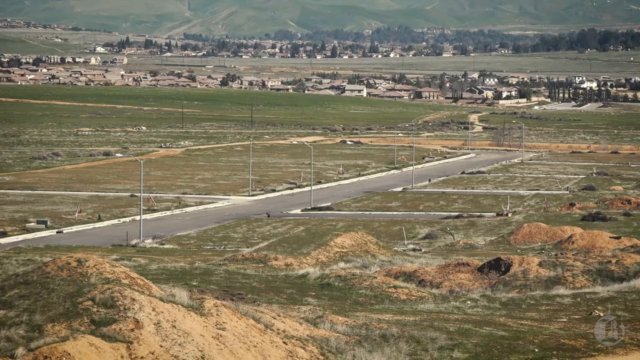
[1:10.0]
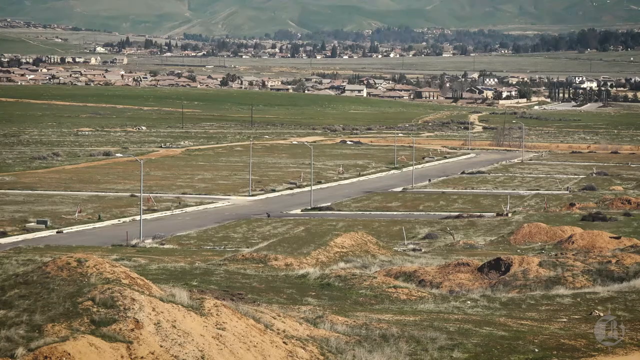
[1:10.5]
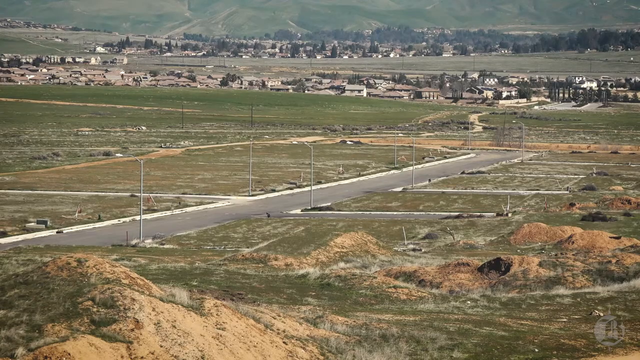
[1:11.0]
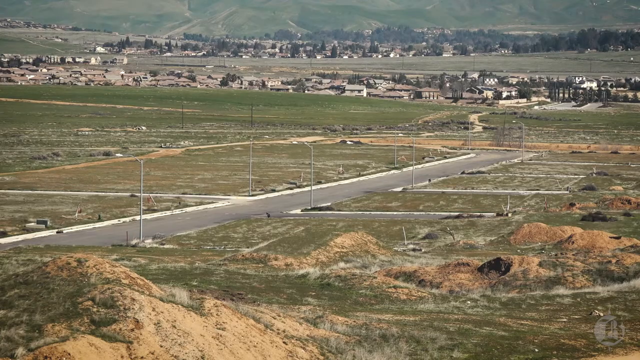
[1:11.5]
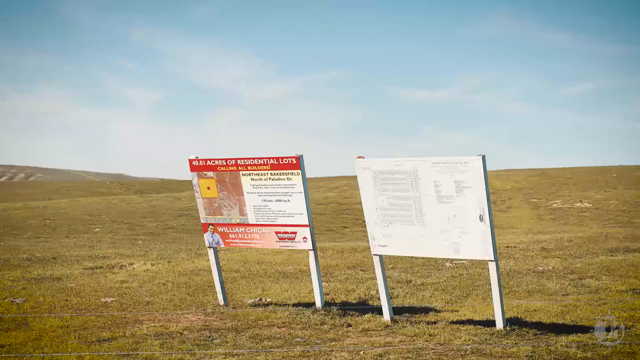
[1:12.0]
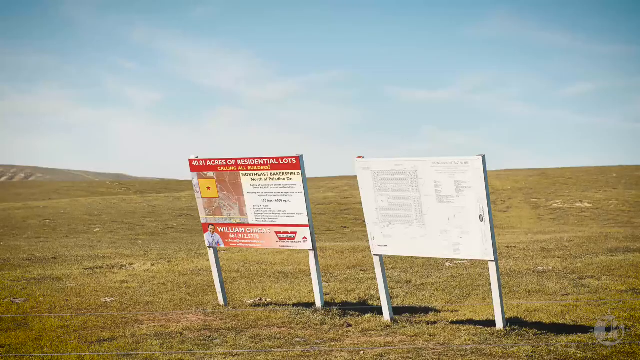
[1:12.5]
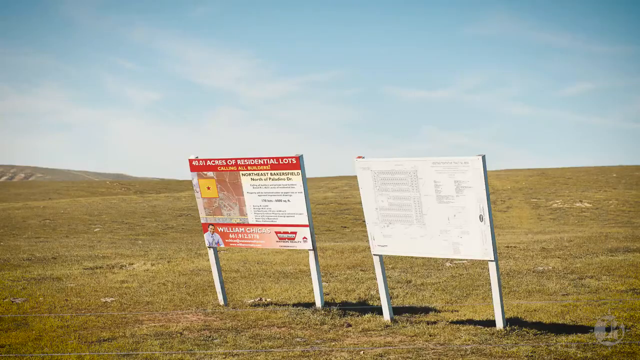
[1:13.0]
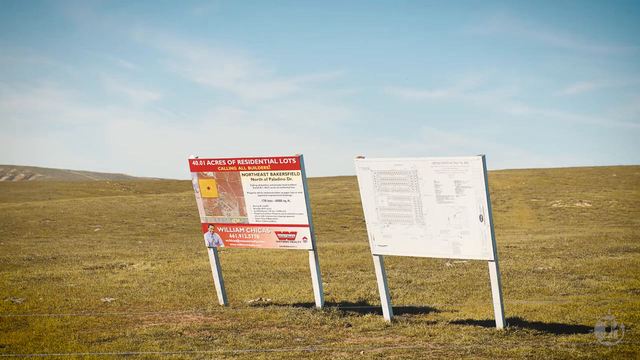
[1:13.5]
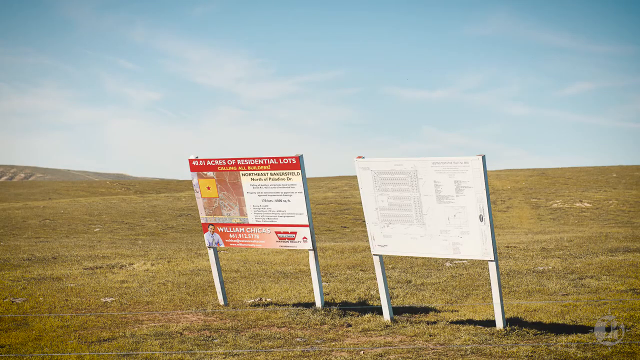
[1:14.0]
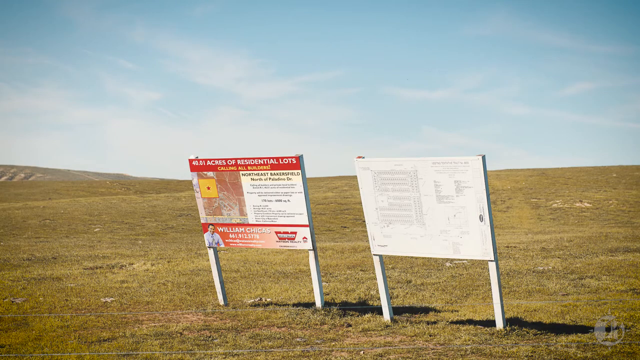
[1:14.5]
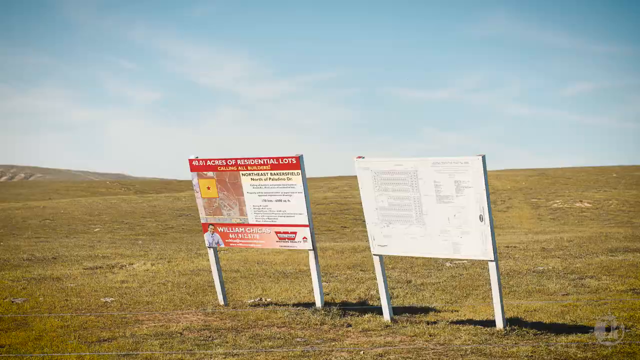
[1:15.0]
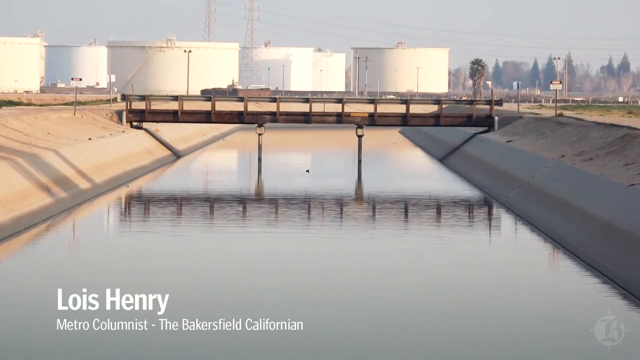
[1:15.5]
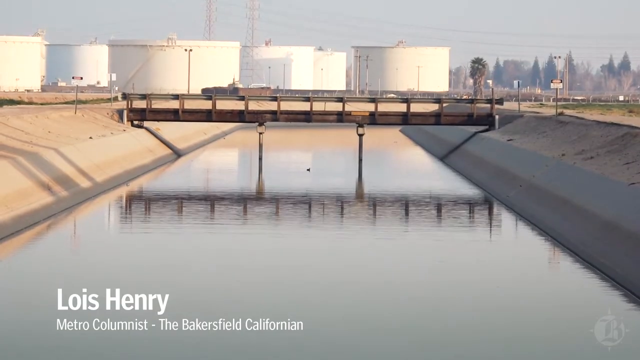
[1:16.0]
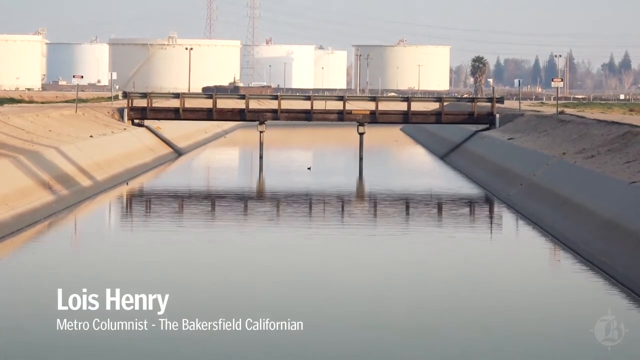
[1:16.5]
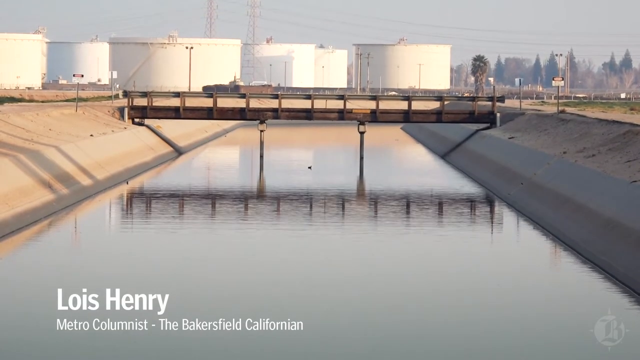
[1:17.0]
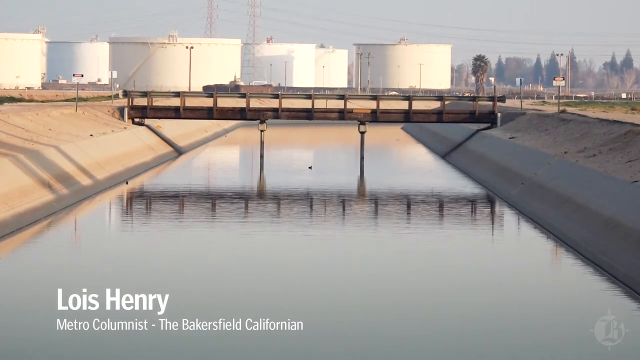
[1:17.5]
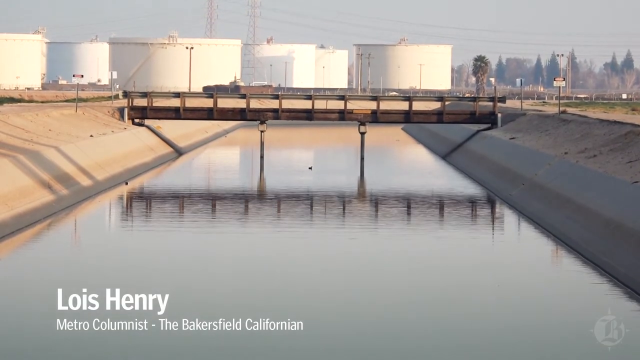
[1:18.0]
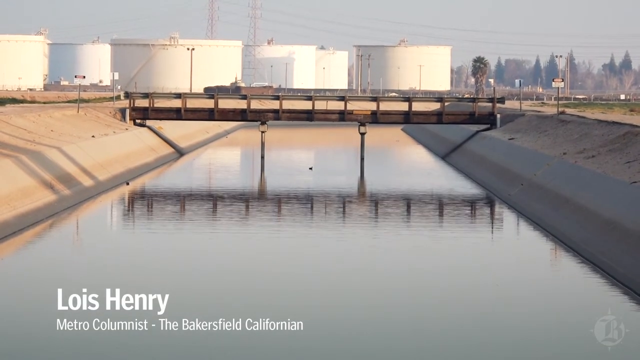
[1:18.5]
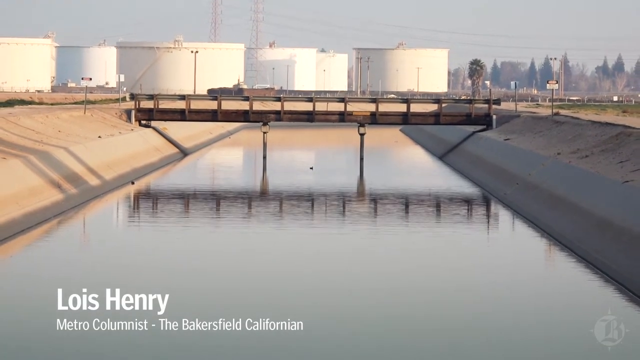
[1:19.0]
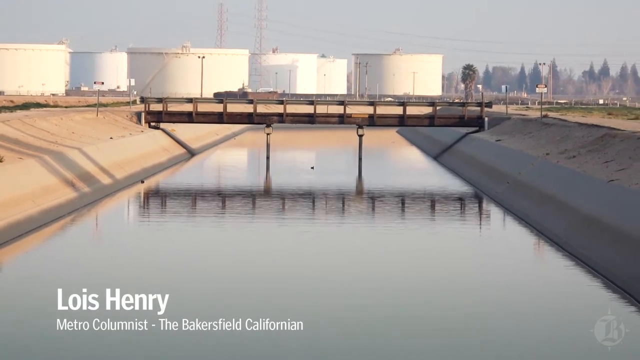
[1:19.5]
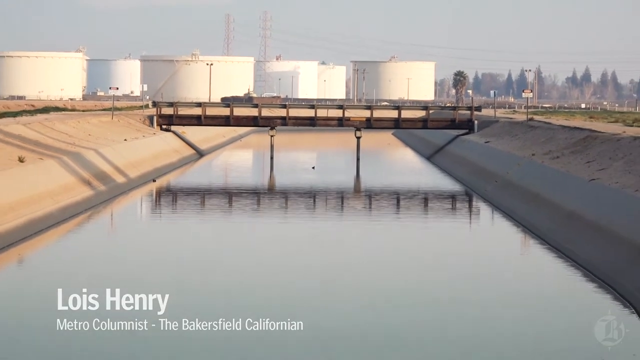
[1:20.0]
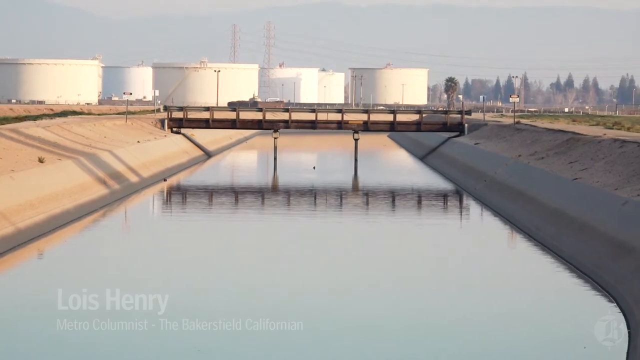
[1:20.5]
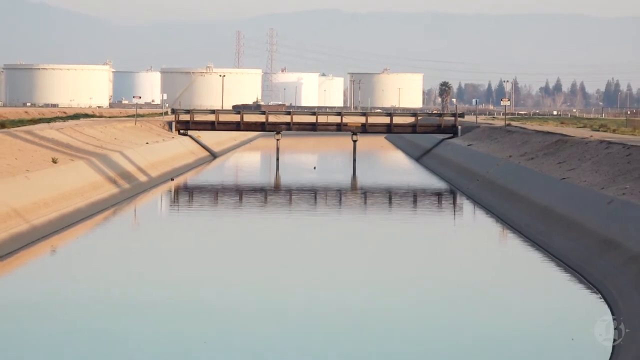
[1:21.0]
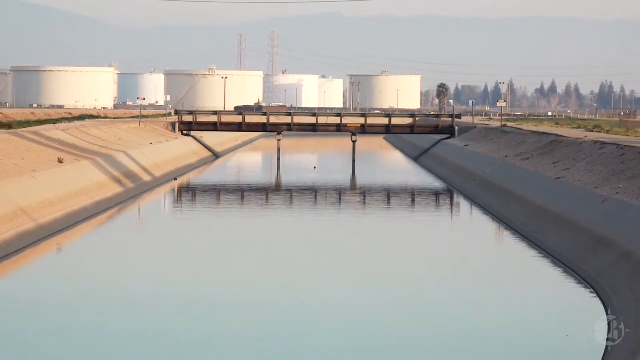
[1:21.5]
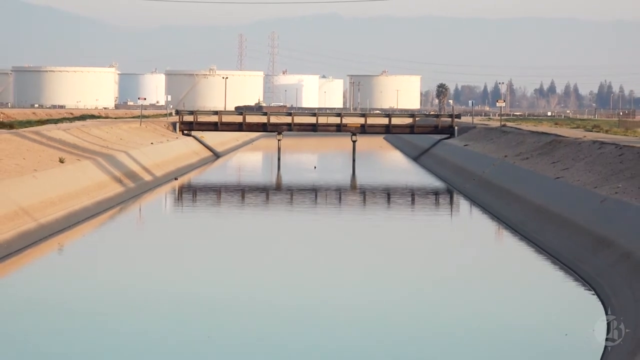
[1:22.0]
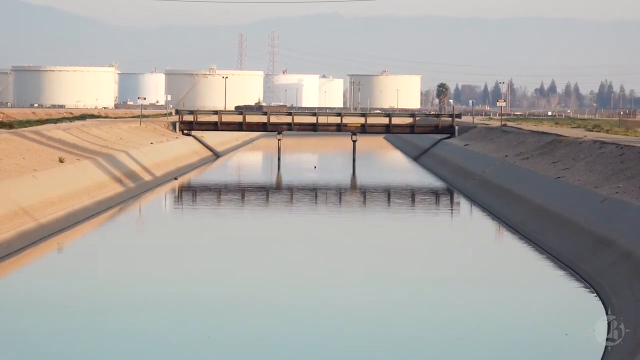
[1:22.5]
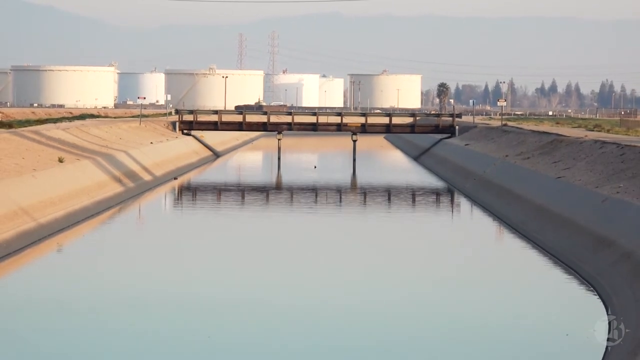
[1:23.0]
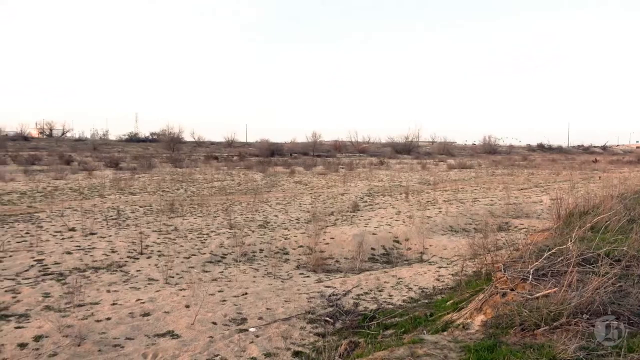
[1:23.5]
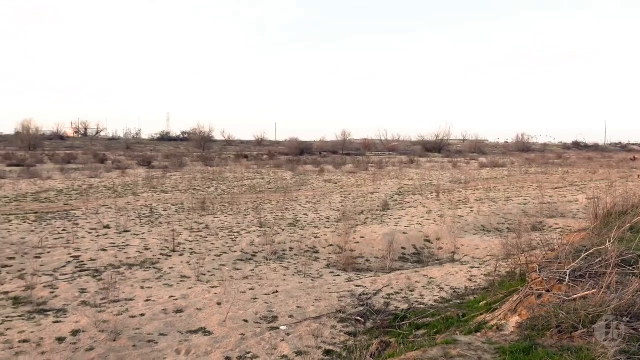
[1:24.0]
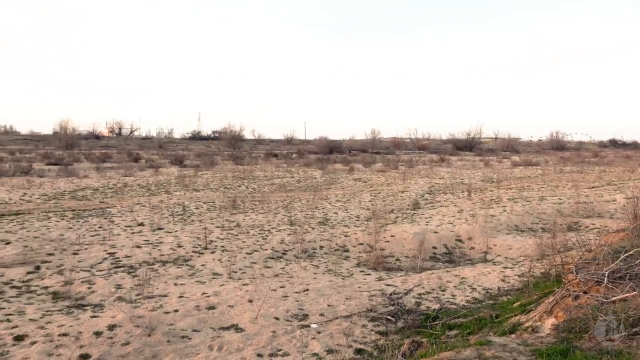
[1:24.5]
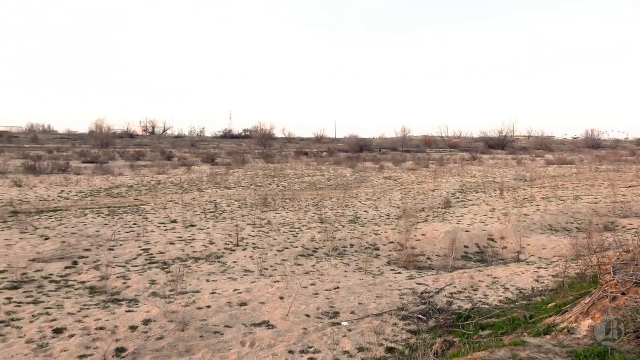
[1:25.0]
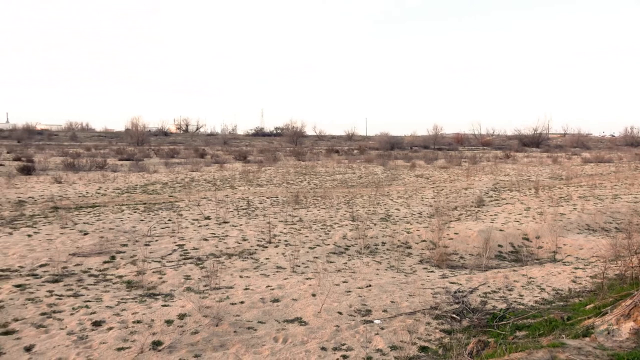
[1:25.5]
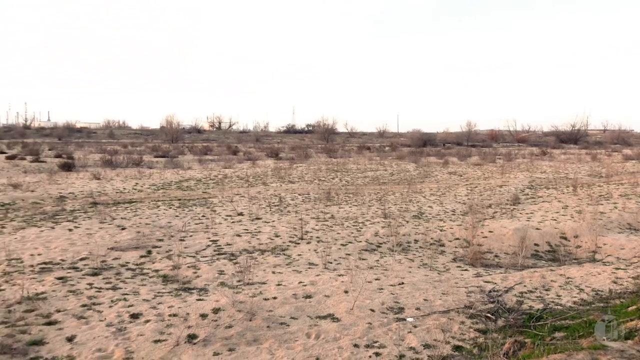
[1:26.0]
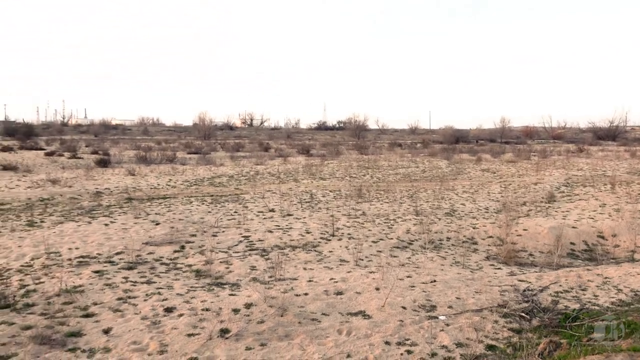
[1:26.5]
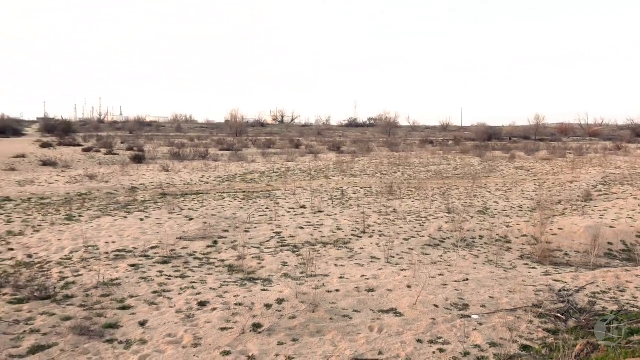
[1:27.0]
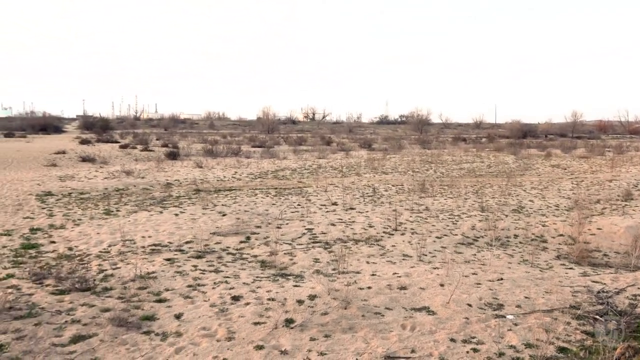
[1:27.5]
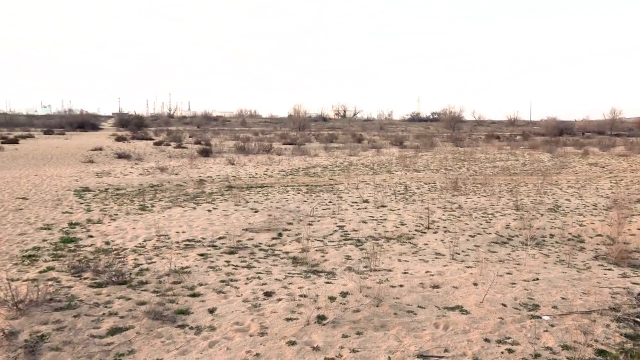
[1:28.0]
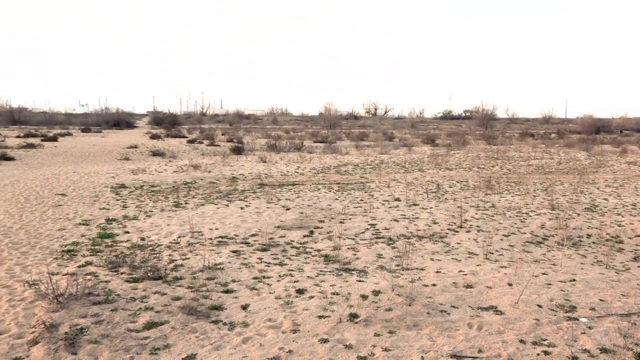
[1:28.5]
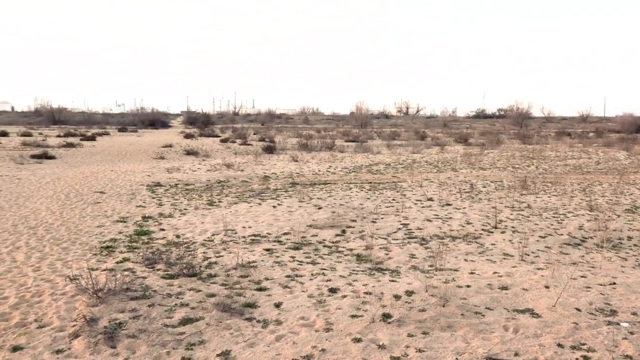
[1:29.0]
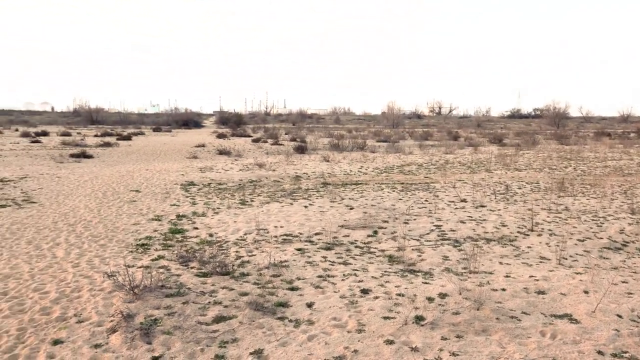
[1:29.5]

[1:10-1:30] A barren, somewhat hilly area of land has two signs on white poles. One is white and hard to read because it is very bright. The one on the left has a red strip and reads along the top "40.01 acres of residential lots" and "calling all," though it is hard to read because it is somewhat blurry. A map shows a yellow square and a red star marking the location, and the sign says "Northeast Bakersfield" with information, and below that the name William Chicas with his phone number and picture. It is bright and sunny. Next is what looks like a reservoir: a big area of water with sand on each side and a rusted walk bridge over it with two support beams, its reflection visible in the water. Massive white water tanks are in the background, and behind them are some red towers, possibly for power or radio. Far in the distance on the right are what looks like a railroad track, palm trees and fir trees. The view zooms away, and a little shadow is visible on something tall on the left side of the screen, suggesting it is a little later in the afternoon. Then the video pans over a very barren, fairly flat area with sparse patches of grass and dead grass and bushes throughout the property, the bushes more in the background. As the camera hovers, many footprints are visible; there is no paved pathway, only sand, showing where a lot of people have trekked over it.